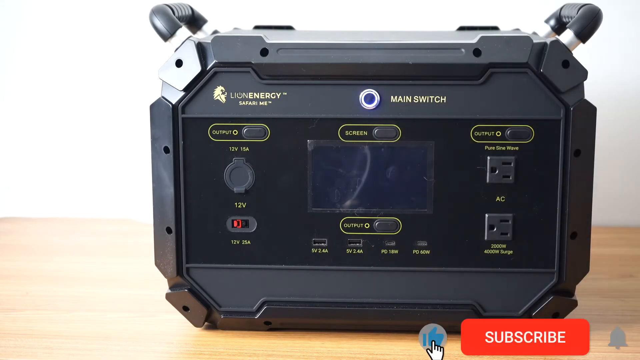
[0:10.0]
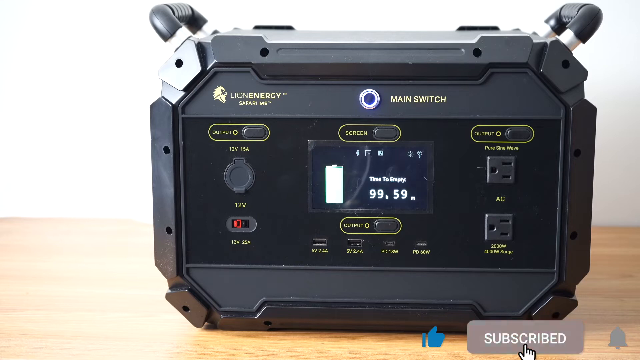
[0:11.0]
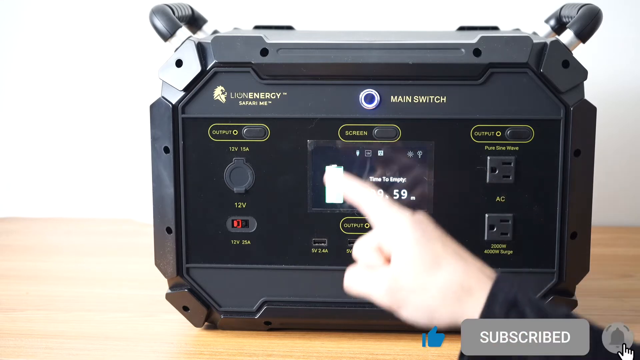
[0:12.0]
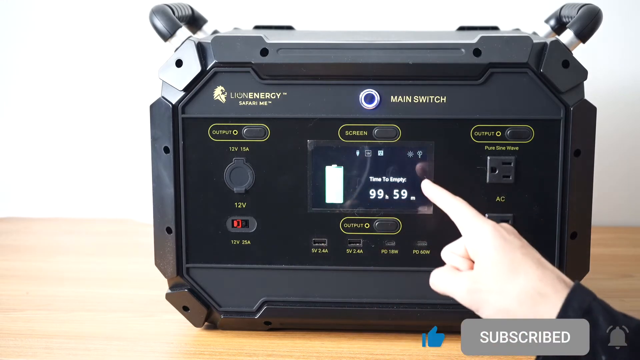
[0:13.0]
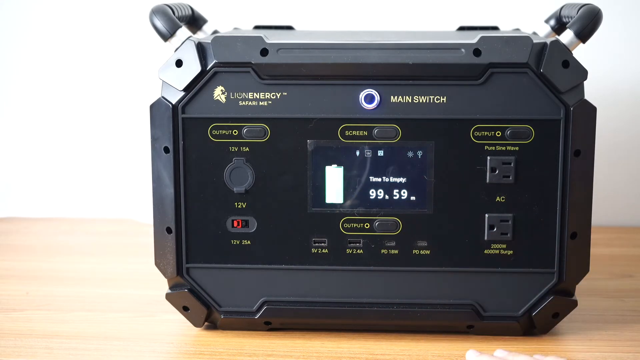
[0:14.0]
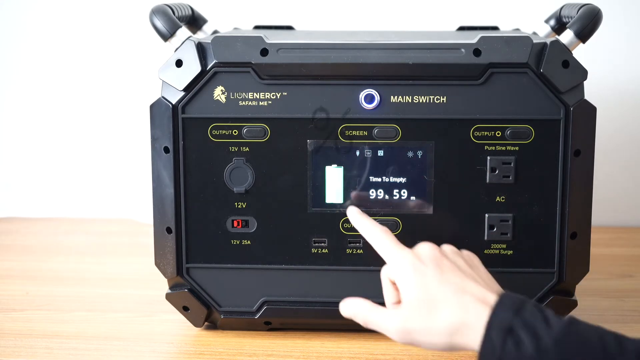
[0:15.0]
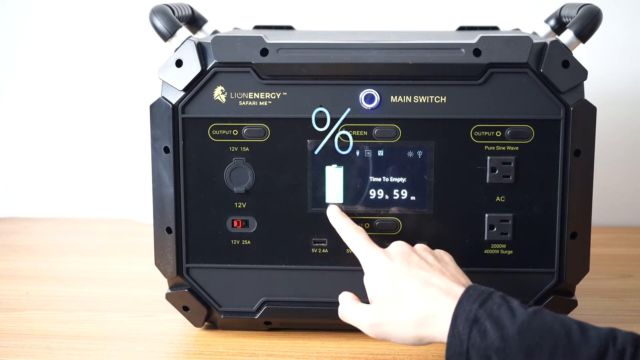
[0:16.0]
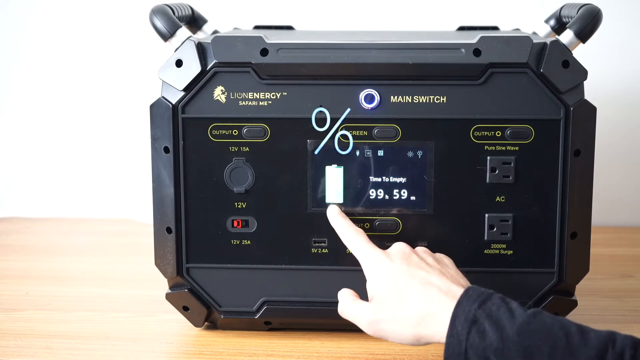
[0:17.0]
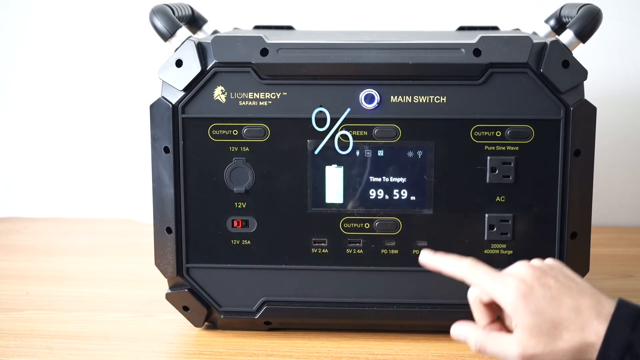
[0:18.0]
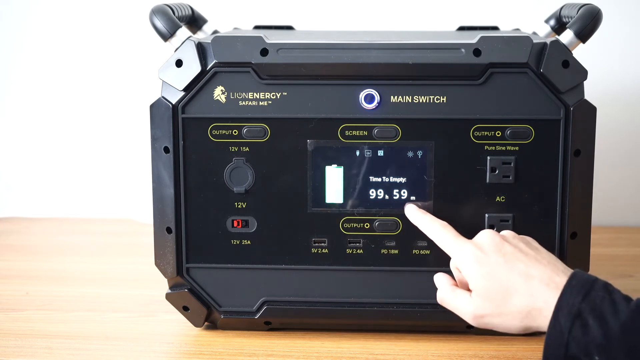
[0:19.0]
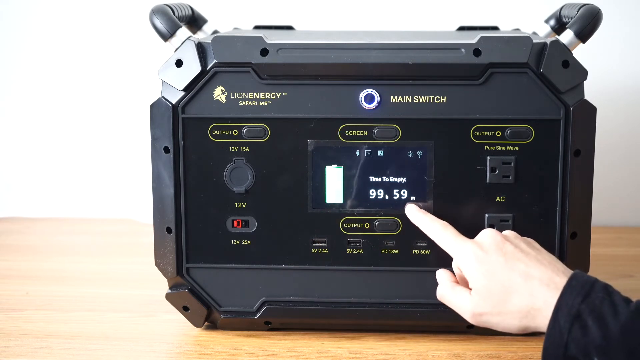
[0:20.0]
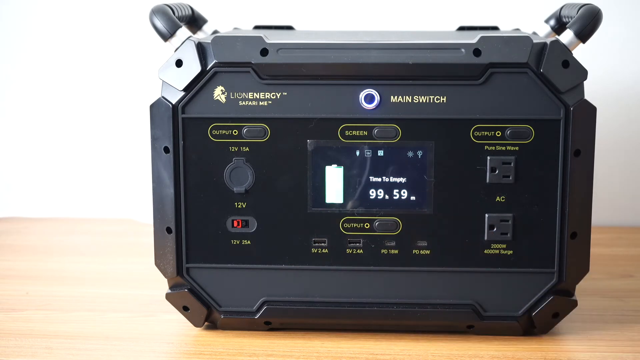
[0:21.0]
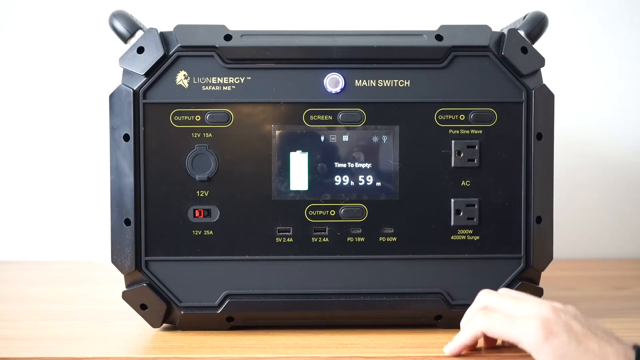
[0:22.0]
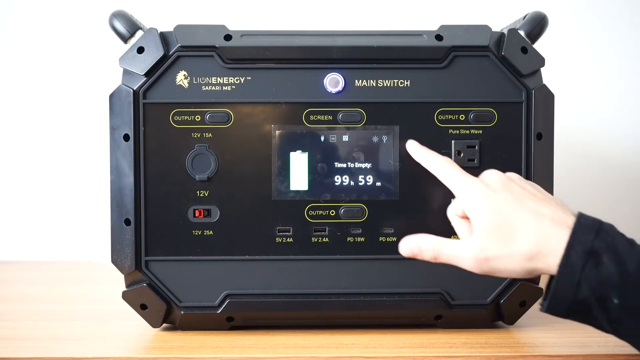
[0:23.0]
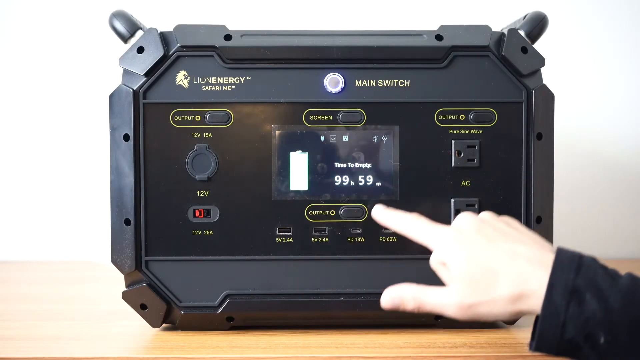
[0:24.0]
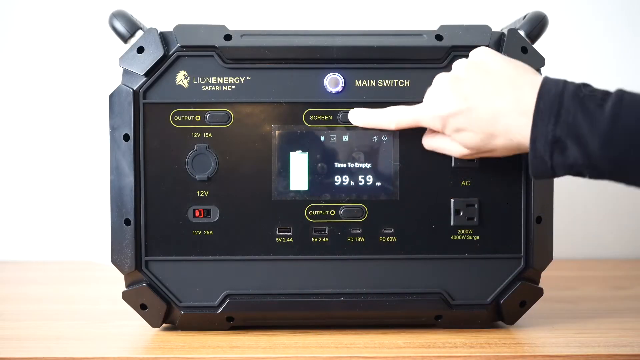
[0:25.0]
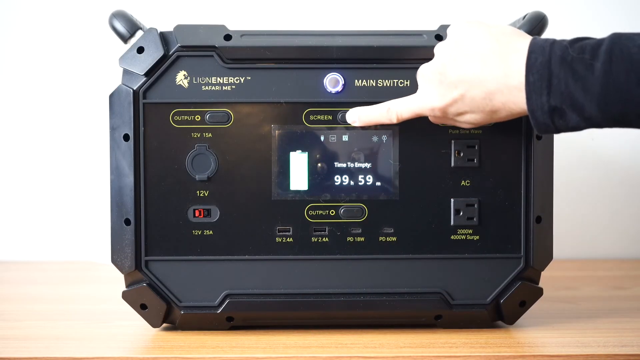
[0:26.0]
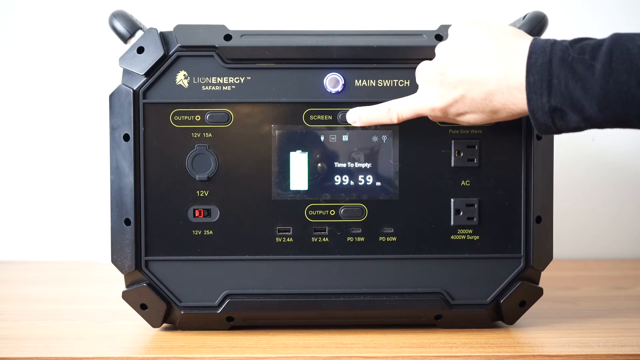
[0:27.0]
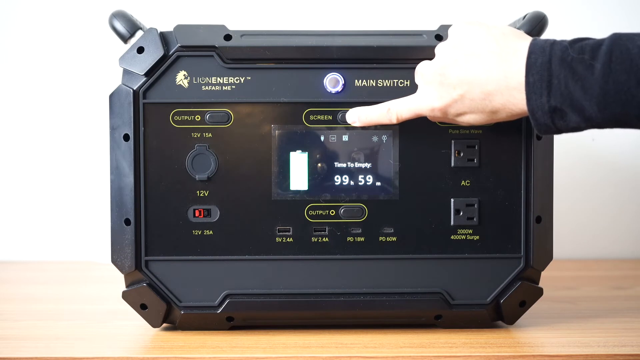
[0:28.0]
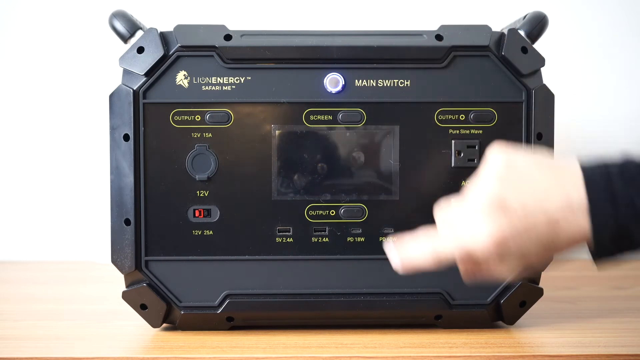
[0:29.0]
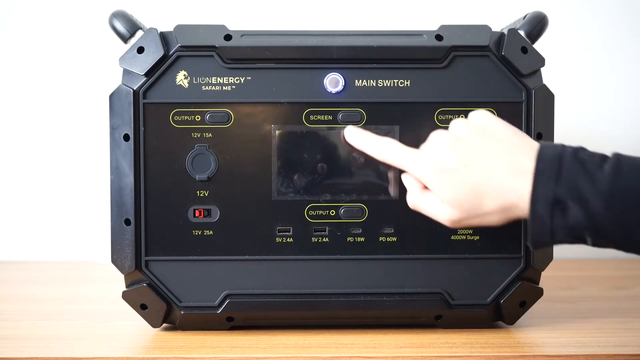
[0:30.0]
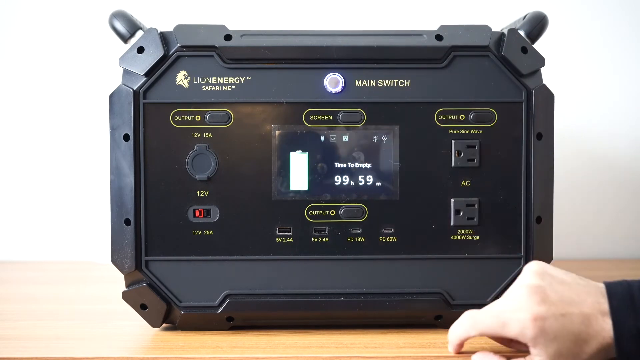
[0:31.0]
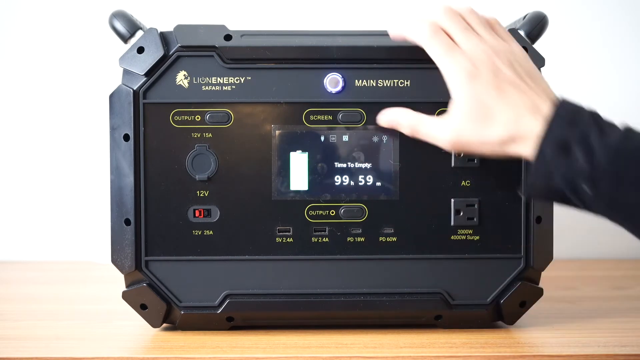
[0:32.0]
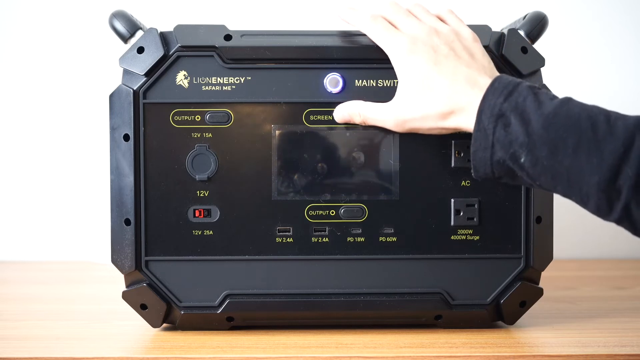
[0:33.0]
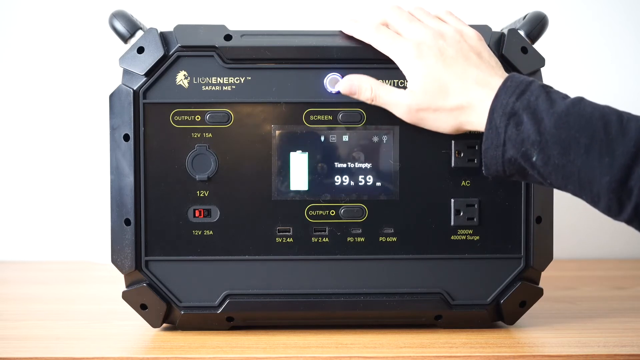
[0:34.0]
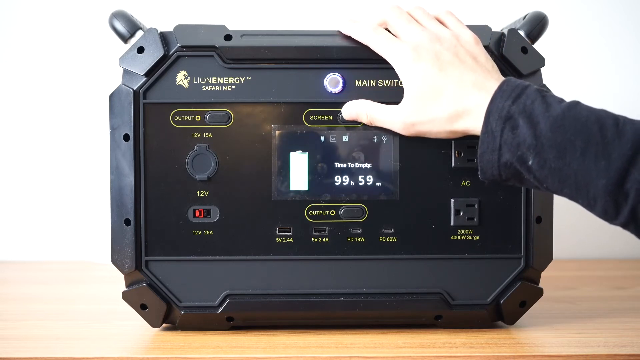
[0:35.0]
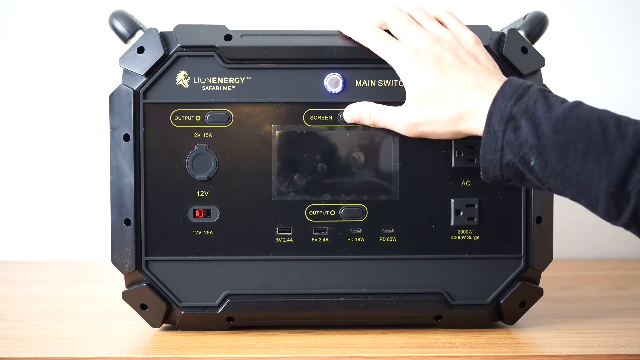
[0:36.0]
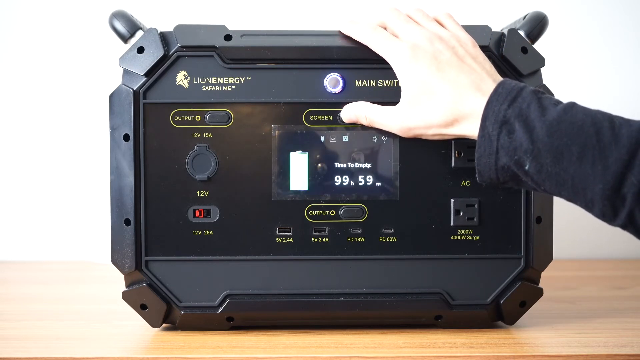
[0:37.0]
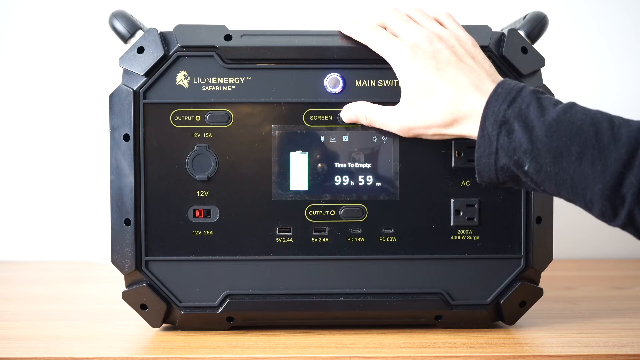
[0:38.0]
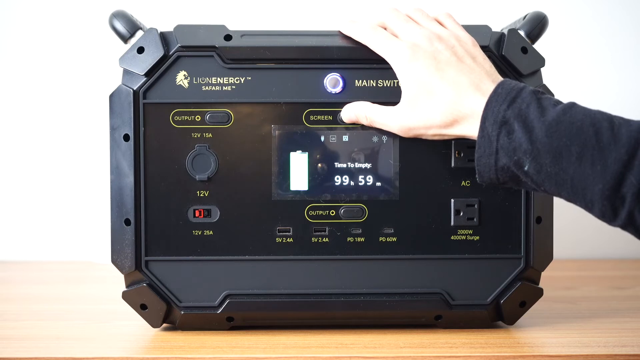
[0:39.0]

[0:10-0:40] An electronic device shows text with a lion that says "Lion Energy Safari Me" and a main switch button. There is an output button at the top left, one at the top right, and one at the bottom center with a screen above it. A 12-volt area is on the left of the device, along with an AC and a 2,000-watt, 4,000-watt surge outlet, and some other little buttons at the bottom. A YouTube subscribe button is at the bottom right of the video. Then text appears on the screen, with what looks like a battery, saying "time to empty, 99 hours, 59 minutes," and some smaller icons at the top of the screen. The person's hand moves in a circle around the screen, then points toward the battery, and a percent symbol pops up on the screen. He then points to the minutes section.